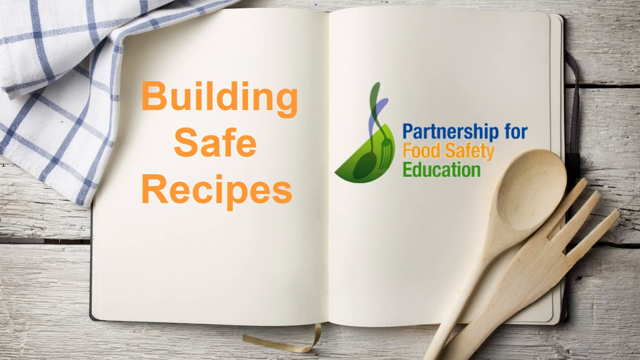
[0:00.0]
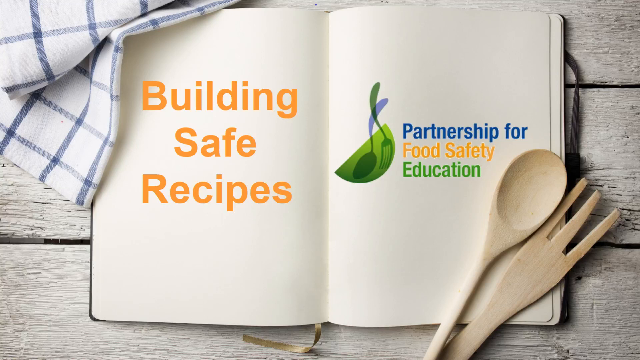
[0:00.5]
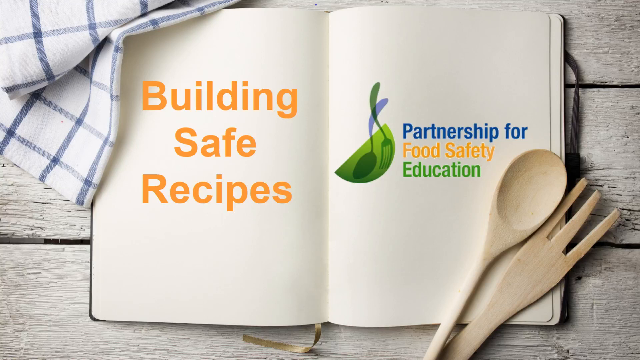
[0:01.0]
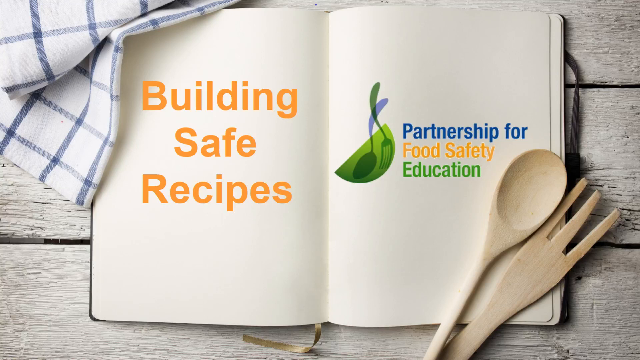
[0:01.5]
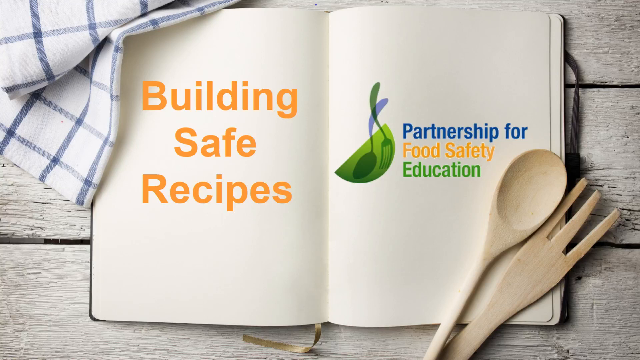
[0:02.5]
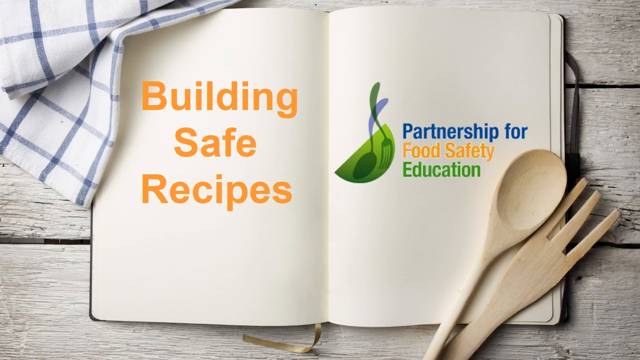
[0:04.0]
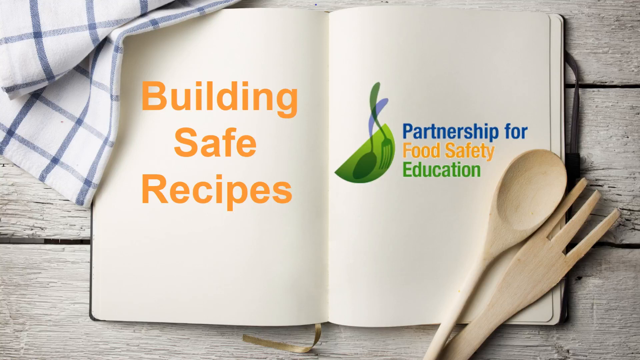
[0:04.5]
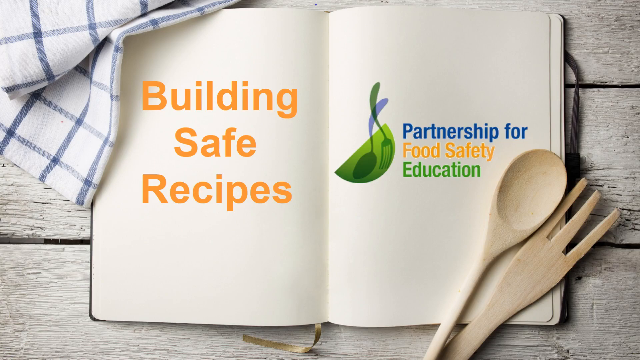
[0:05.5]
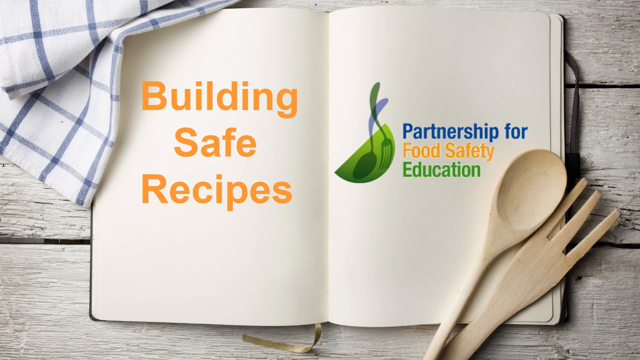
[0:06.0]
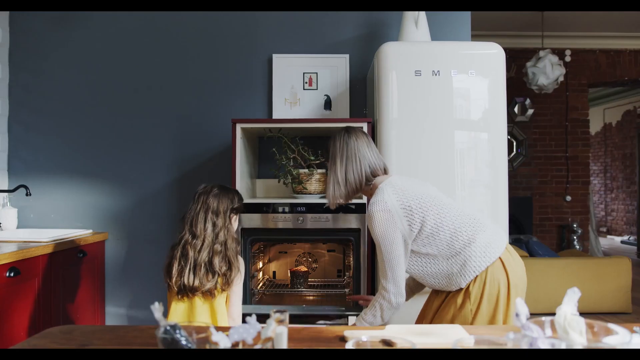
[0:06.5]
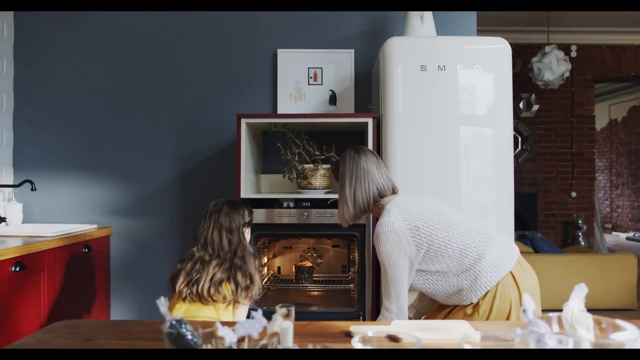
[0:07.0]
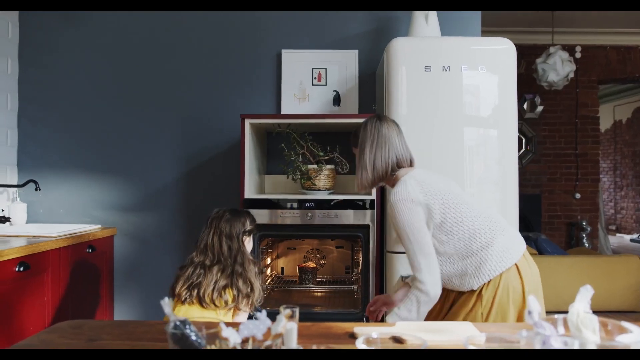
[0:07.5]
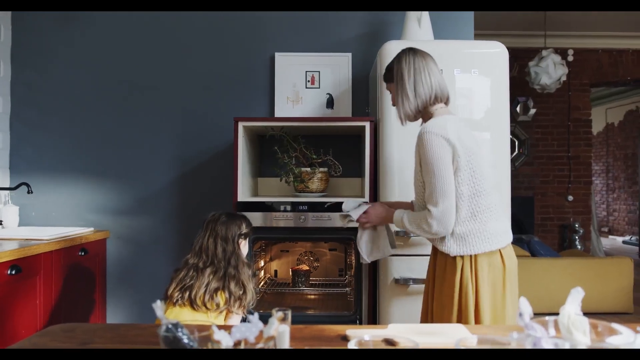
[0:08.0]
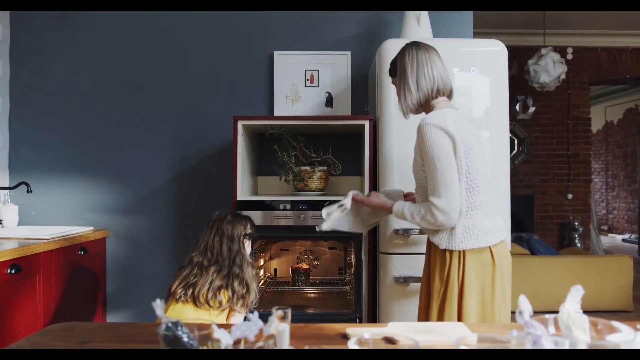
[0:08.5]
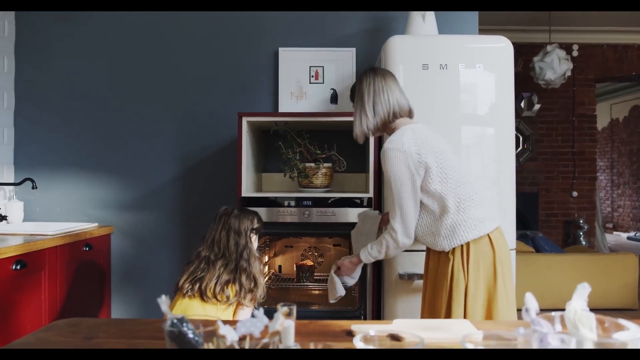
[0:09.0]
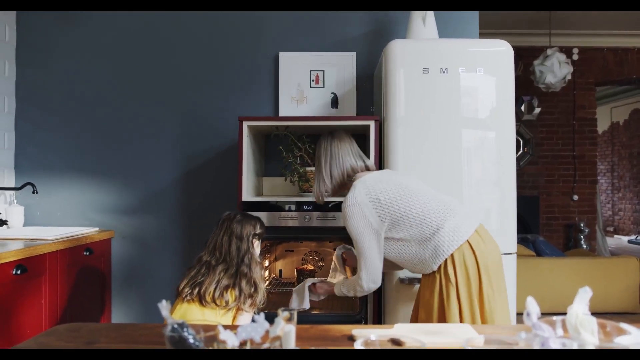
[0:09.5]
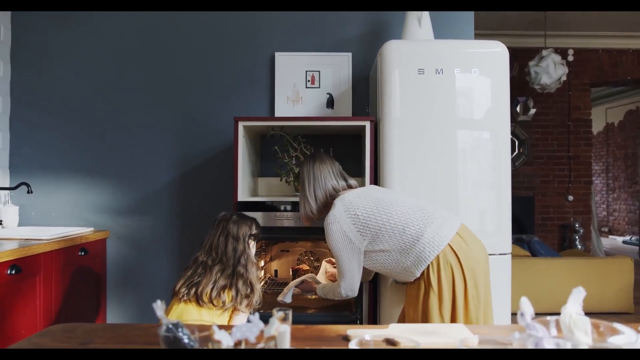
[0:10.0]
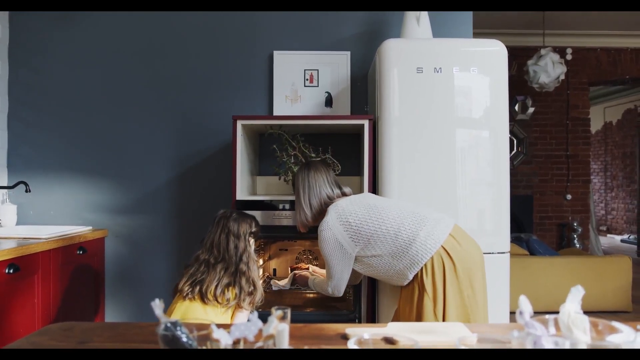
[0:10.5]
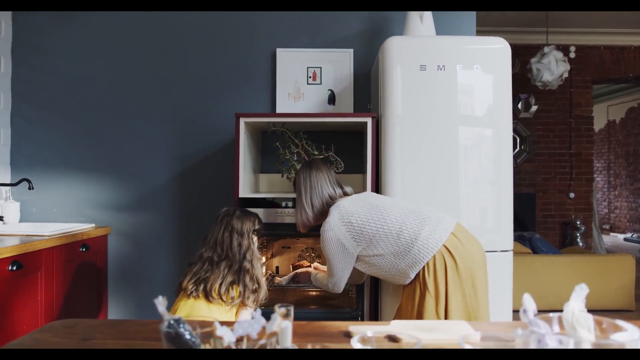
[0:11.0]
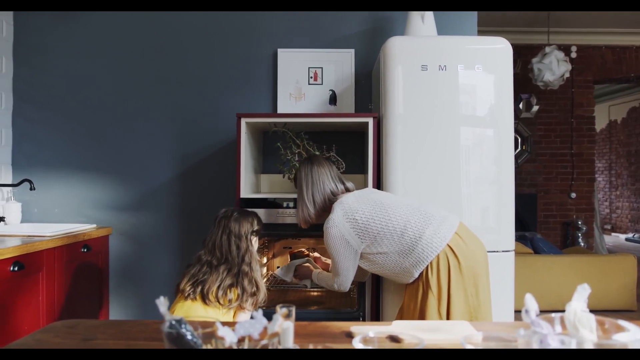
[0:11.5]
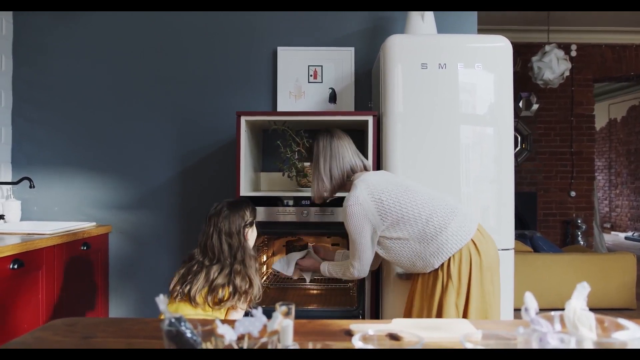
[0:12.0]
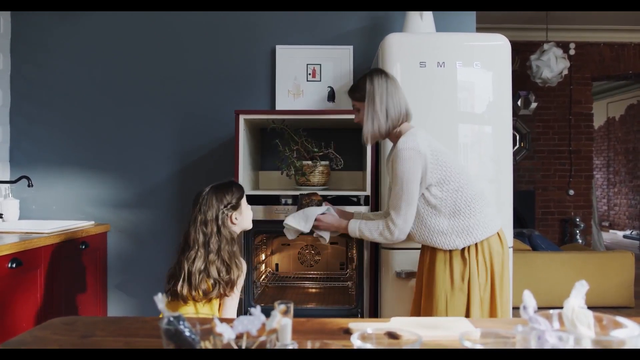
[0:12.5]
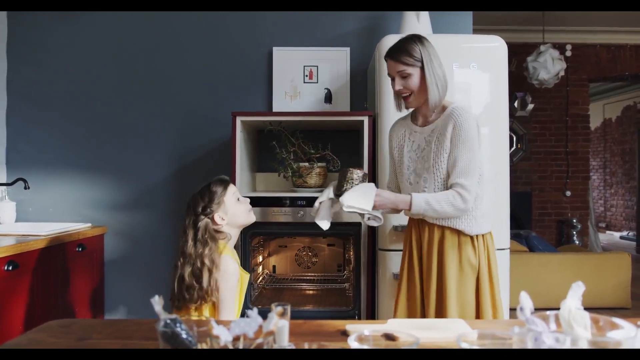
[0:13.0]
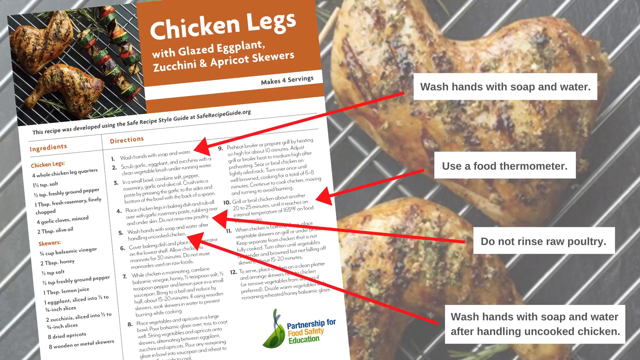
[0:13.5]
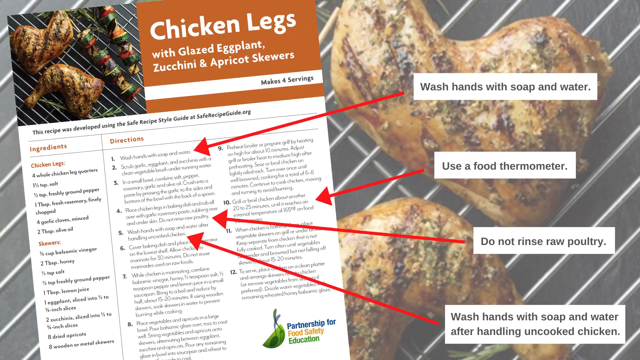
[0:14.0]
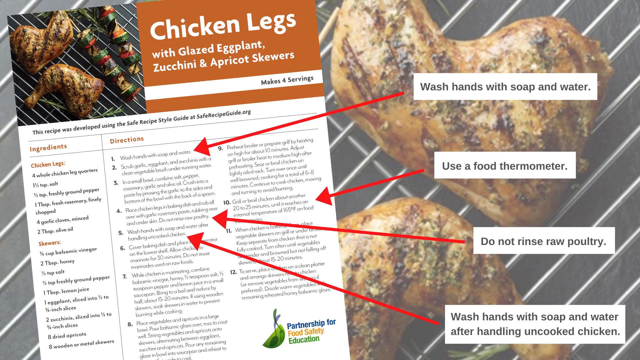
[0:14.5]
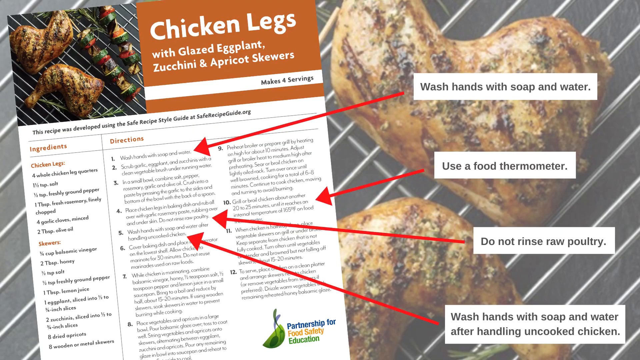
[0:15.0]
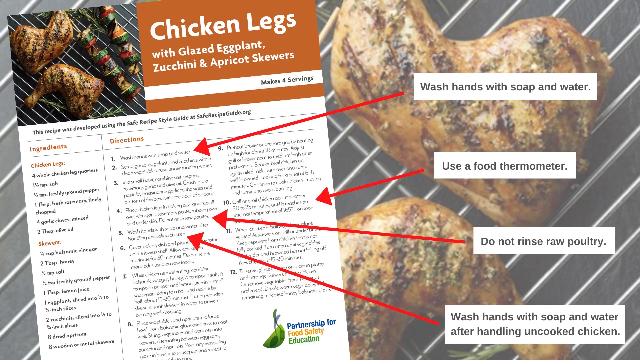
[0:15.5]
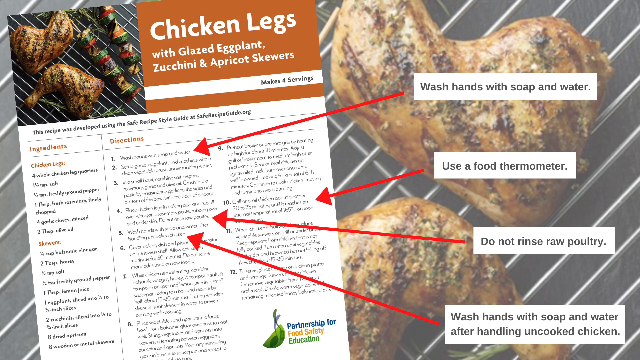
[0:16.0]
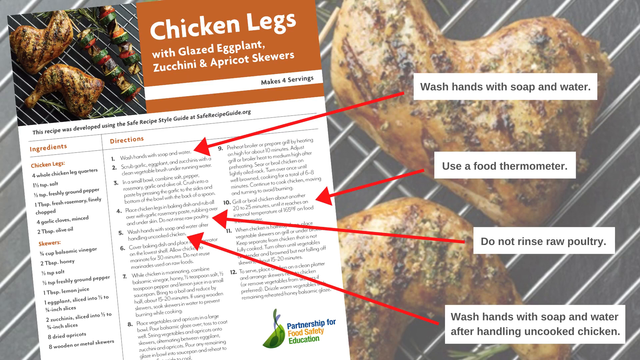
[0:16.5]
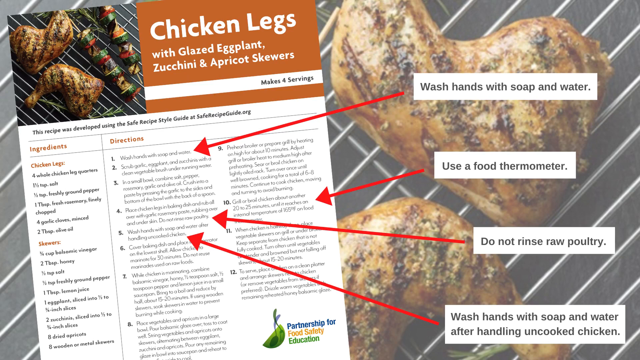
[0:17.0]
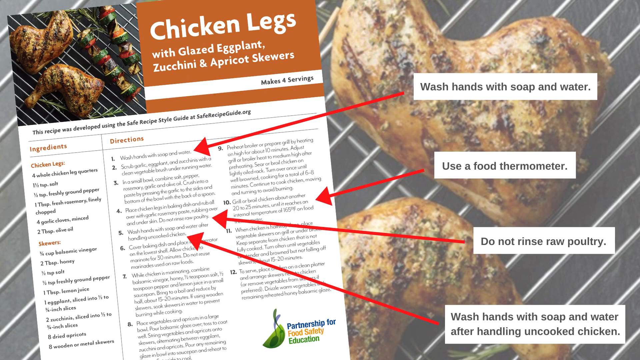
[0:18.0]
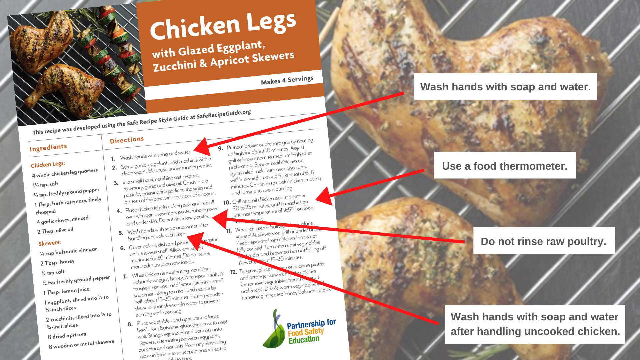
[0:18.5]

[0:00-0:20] A mom is in a kitchen cooking something. She takes something out of the oven, and a kid sitting on a chair watches her as she takes out a pot; the kid seems interested in learning about cooking. There is a book, along with wooden spoons and a wooden fork. The kitchen is small, with a lot of things inside, including a fridge.